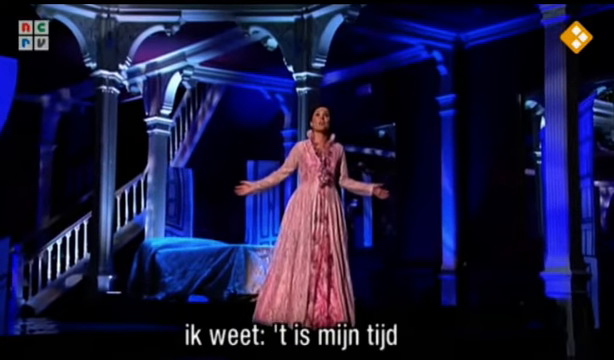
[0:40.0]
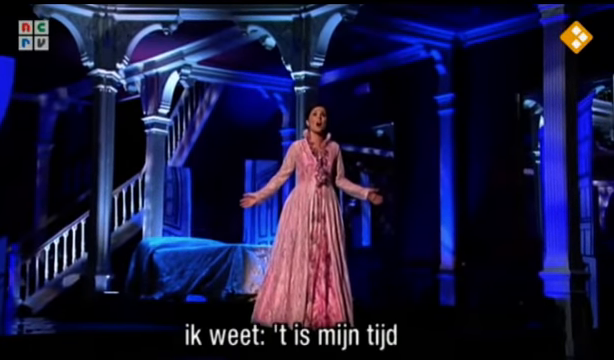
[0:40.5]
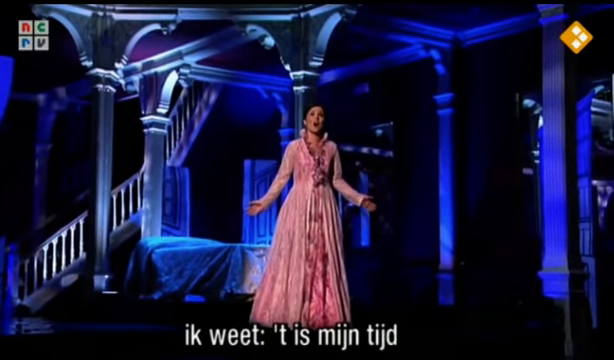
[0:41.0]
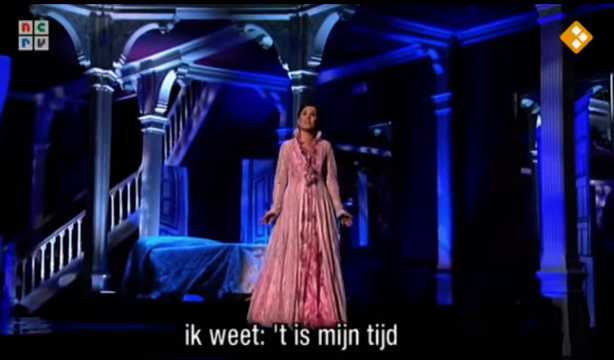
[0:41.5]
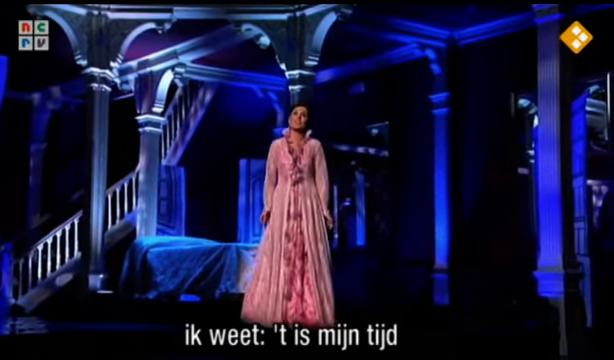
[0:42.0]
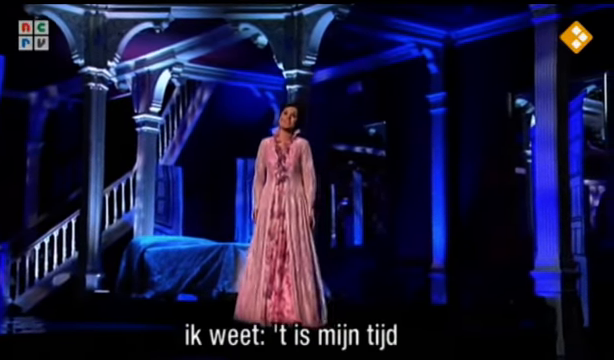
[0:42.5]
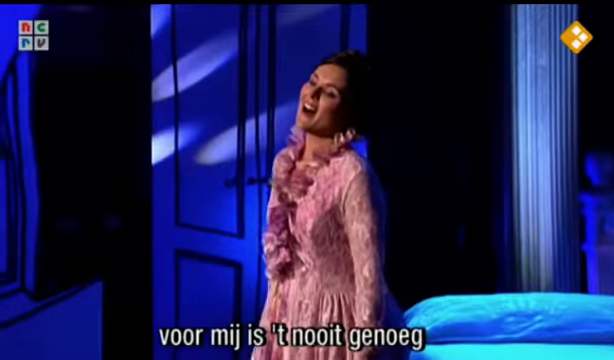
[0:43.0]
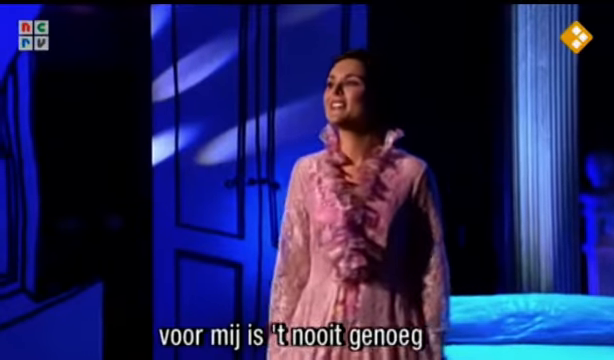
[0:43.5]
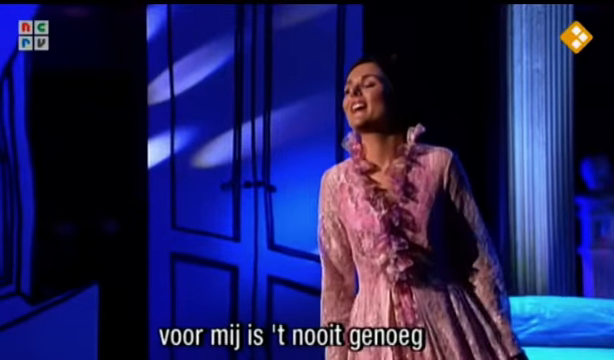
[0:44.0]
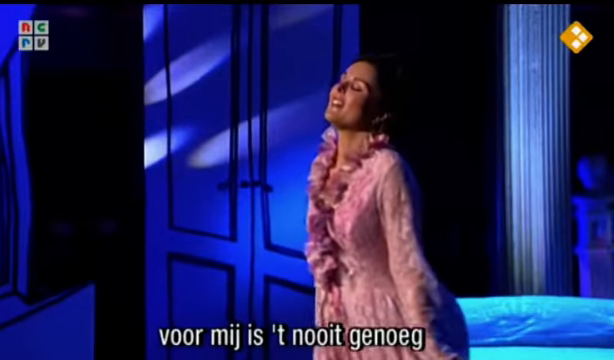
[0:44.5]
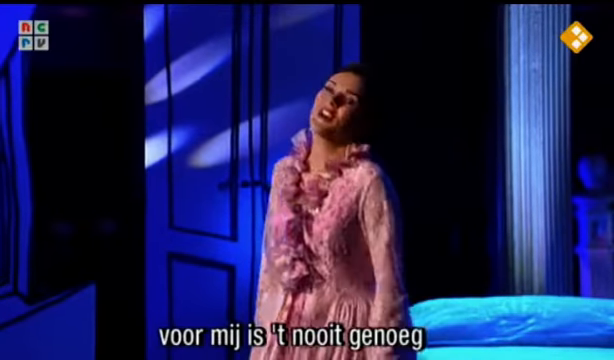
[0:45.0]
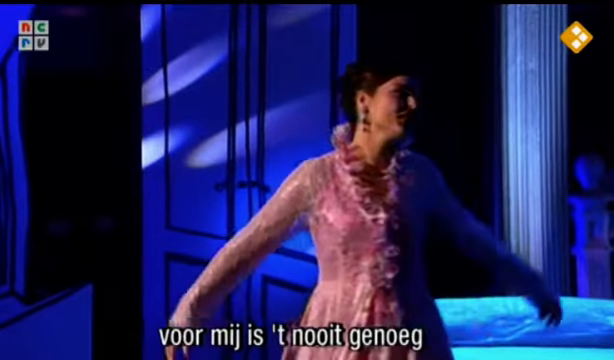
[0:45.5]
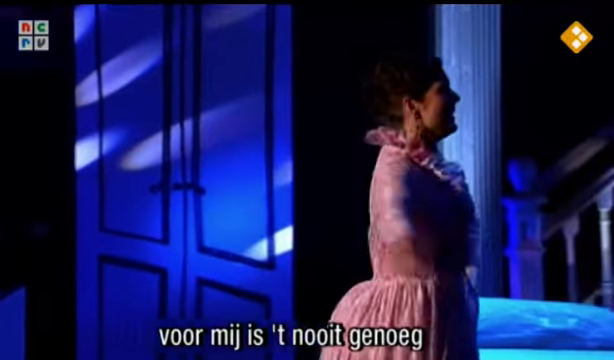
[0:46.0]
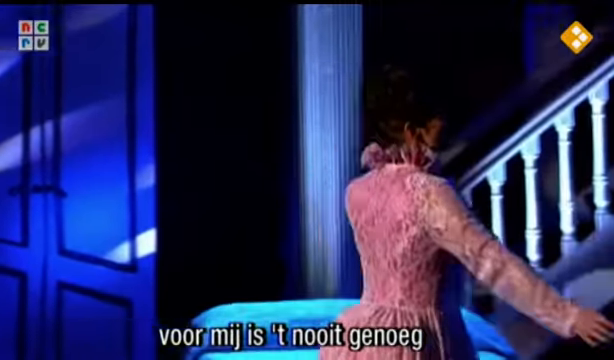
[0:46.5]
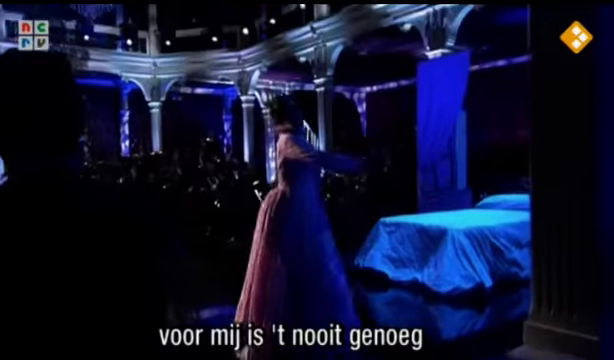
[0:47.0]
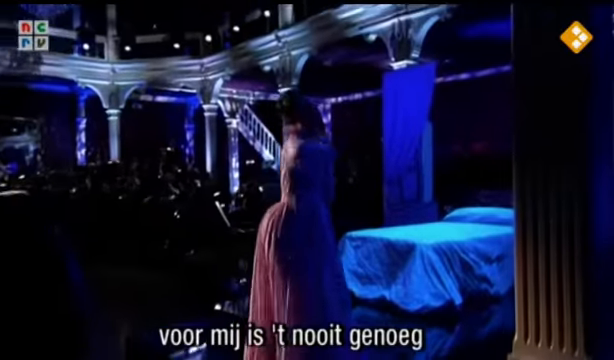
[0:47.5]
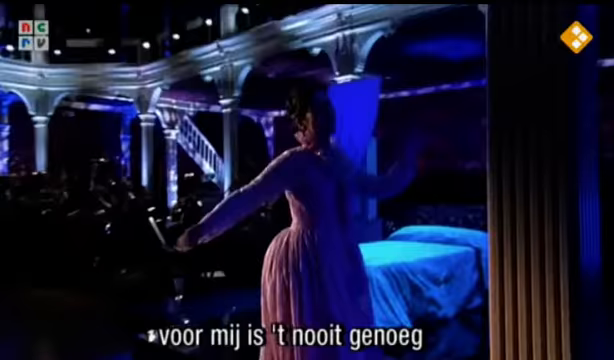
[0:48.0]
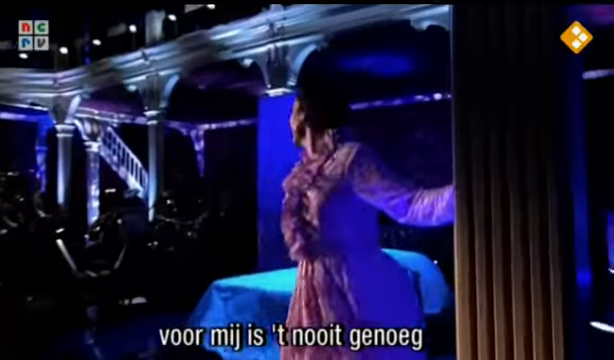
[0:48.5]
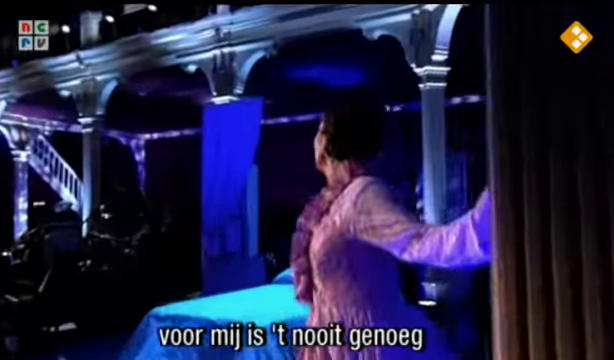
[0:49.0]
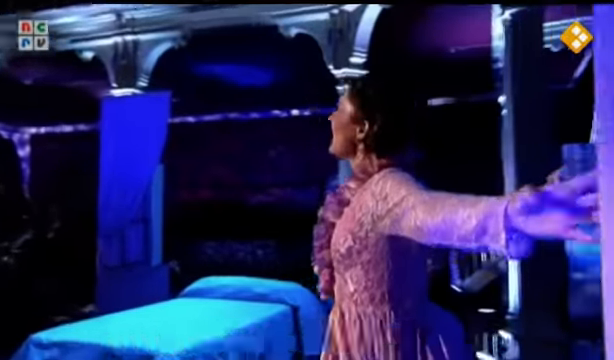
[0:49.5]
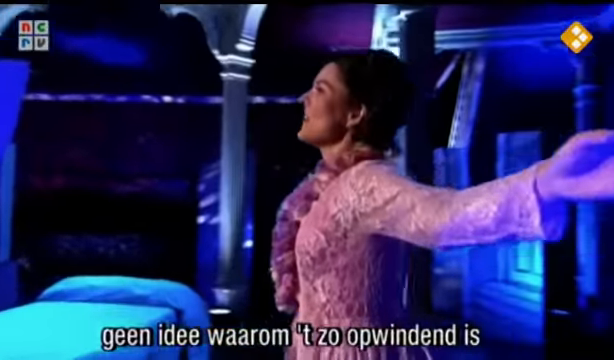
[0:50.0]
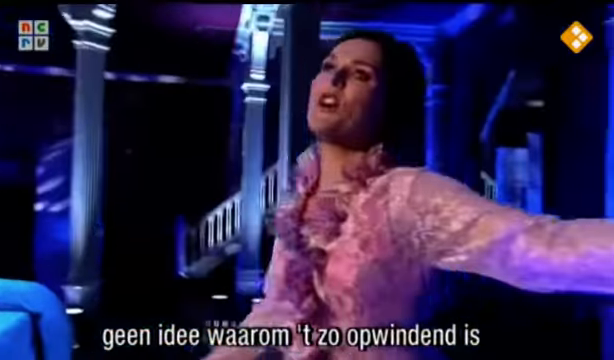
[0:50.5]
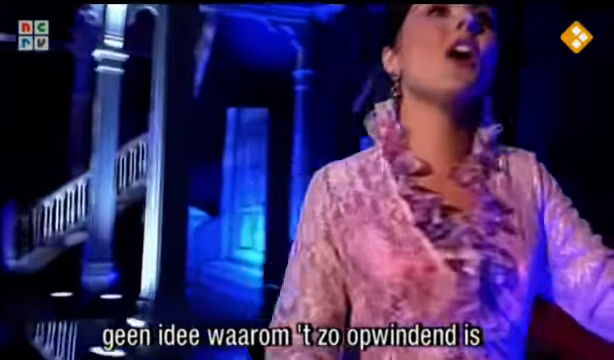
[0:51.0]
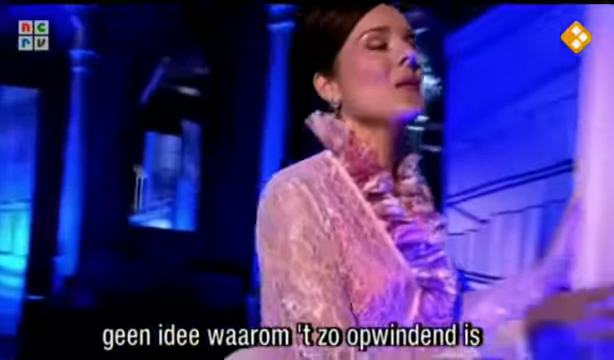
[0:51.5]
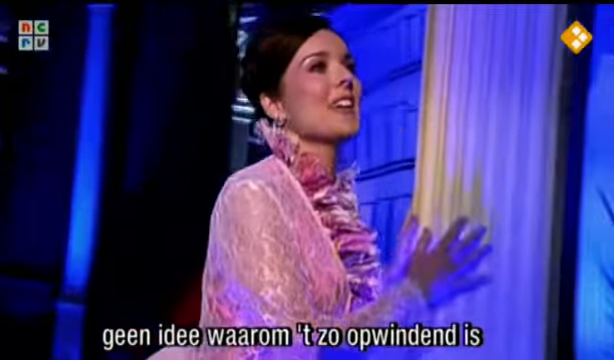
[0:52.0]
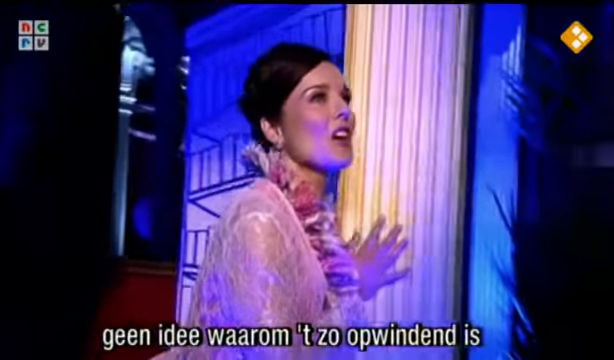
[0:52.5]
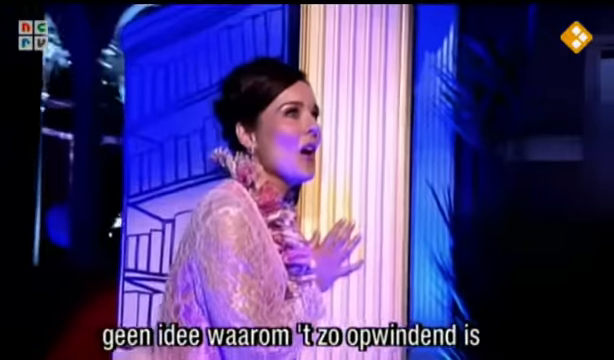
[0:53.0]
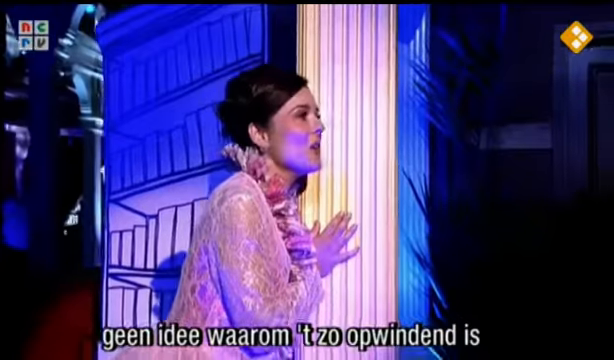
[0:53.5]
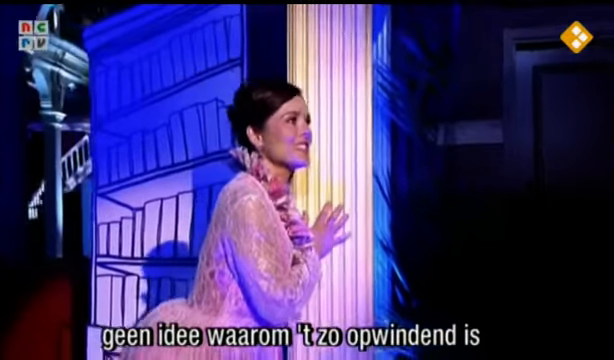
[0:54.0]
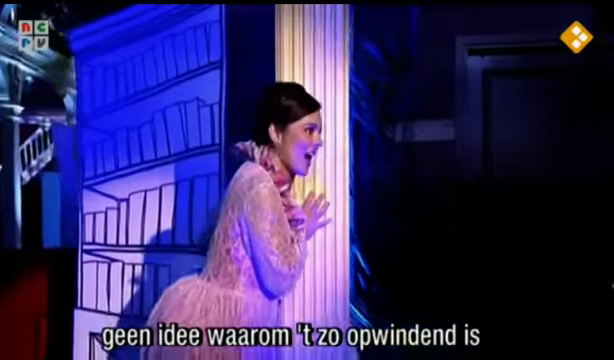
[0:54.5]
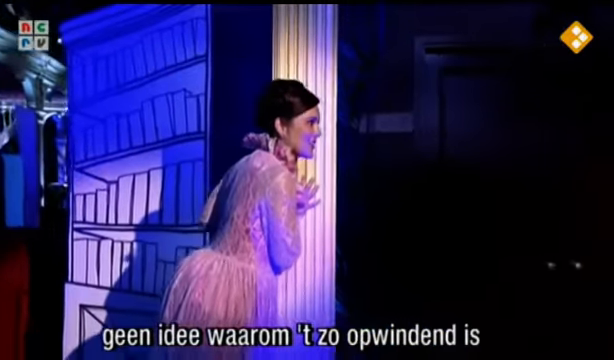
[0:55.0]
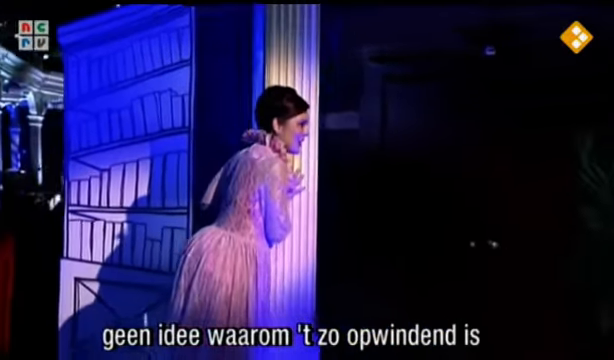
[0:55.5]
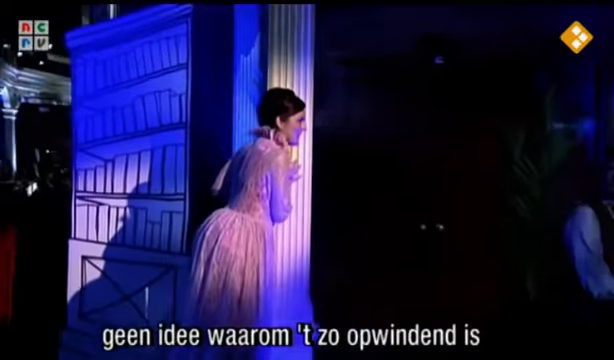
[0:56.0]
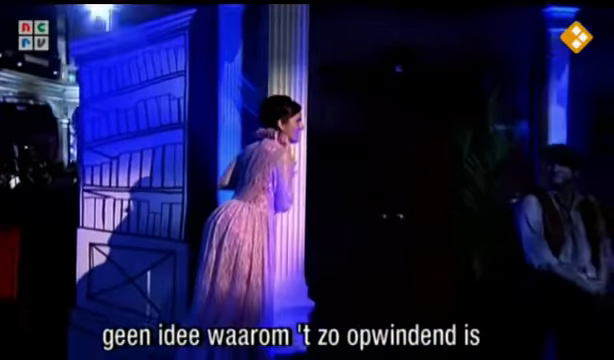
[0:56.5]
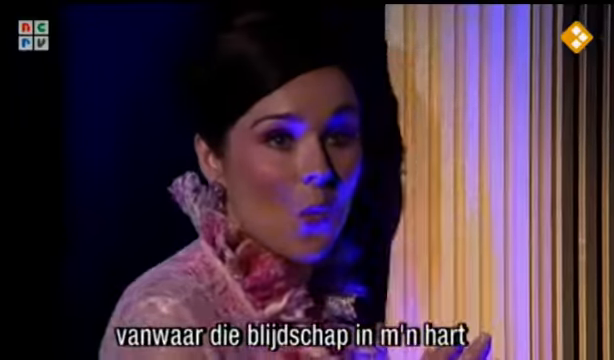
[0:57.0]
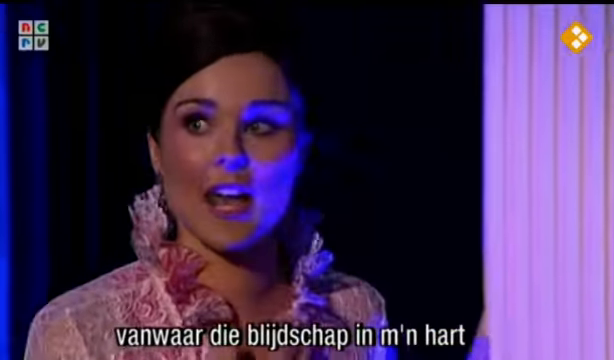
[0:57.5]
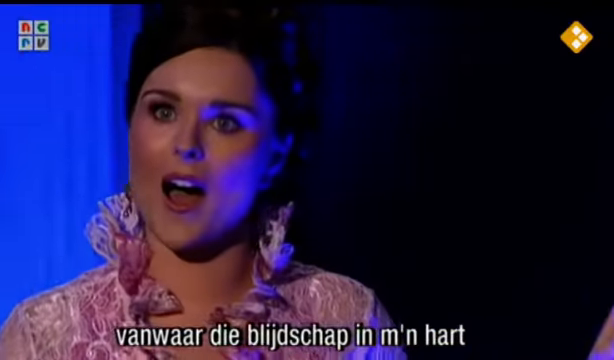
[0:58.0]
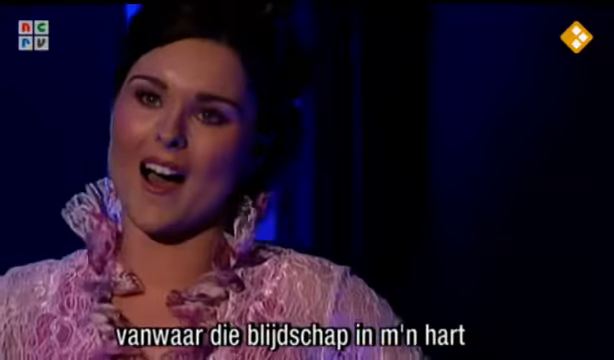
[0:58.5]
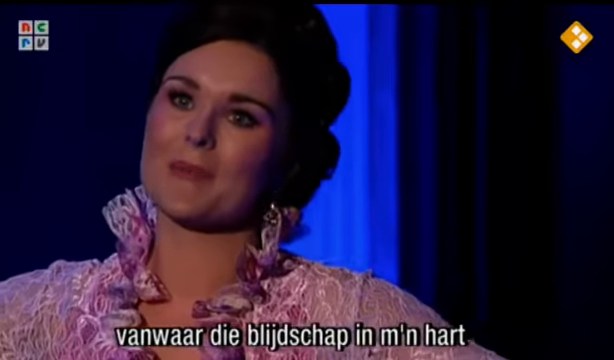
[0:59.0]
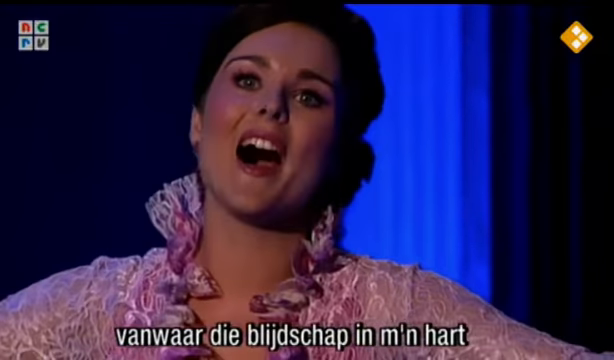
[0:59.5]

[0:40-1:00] The woman sings passionately toward the audience with her arms slightly spread to the sides, then gently drops her arms and starts swaying her body left and right. She does a half turn and walks to a part of the stage with a very large pillar, where she stands and sings with her back to the audience before quickly turning, making use of the stage space and props. She goes up to the pillar with her cheek and hands next to it as she sings, with a dreamy or longing expression. A spotlight on her follows her movements. The camera moves from a distant angle to a closer shot of her face as she sings.